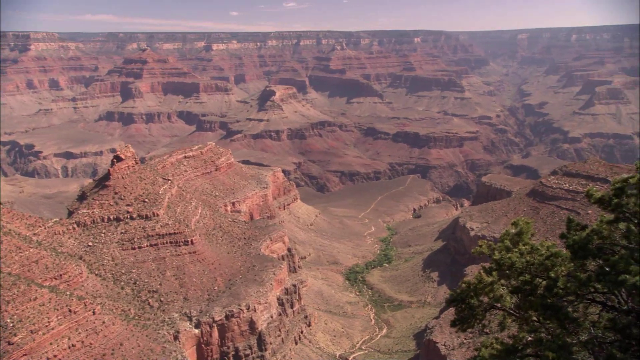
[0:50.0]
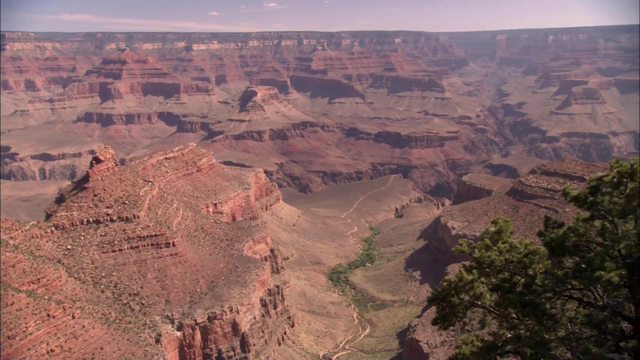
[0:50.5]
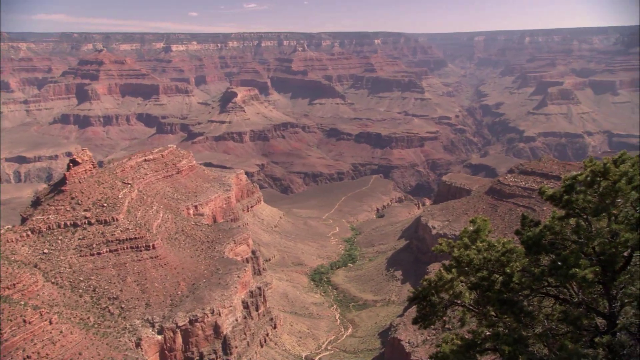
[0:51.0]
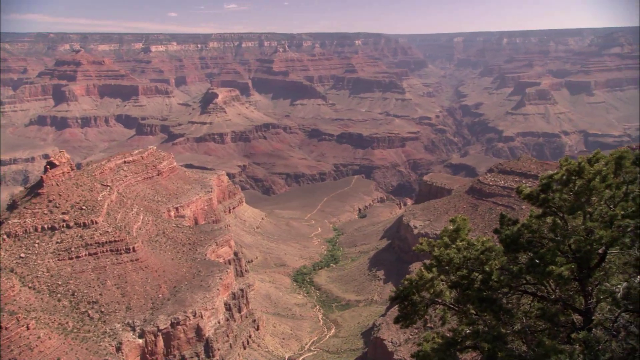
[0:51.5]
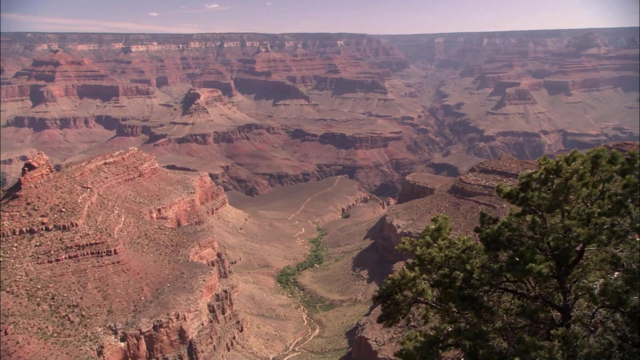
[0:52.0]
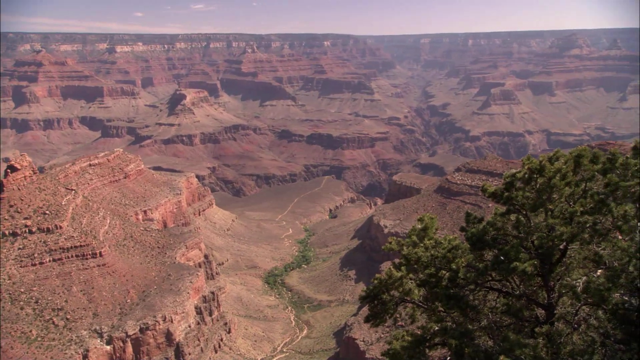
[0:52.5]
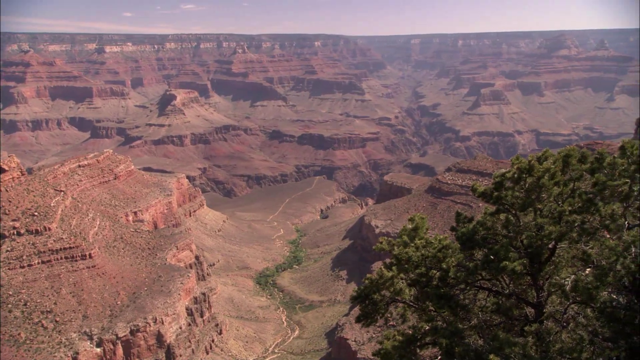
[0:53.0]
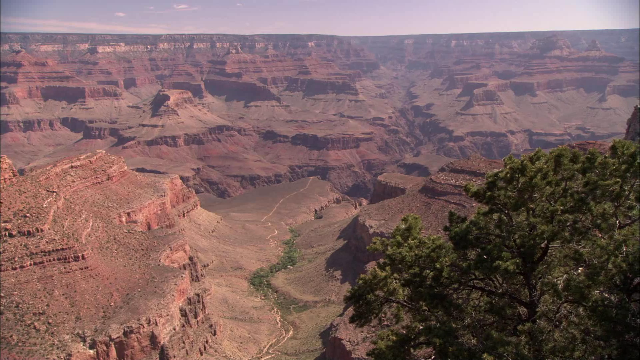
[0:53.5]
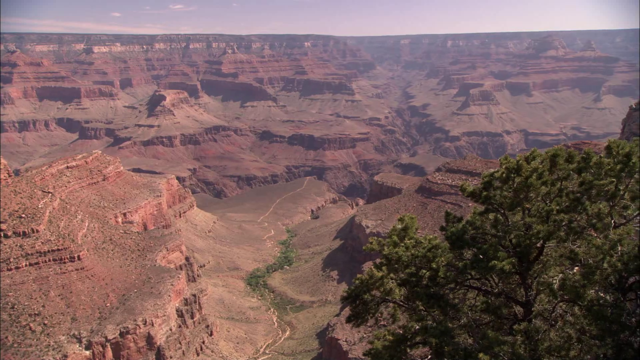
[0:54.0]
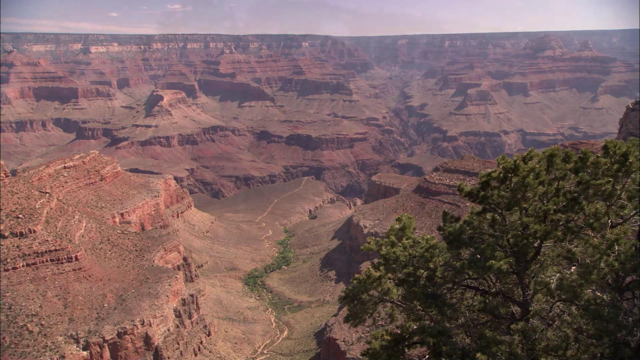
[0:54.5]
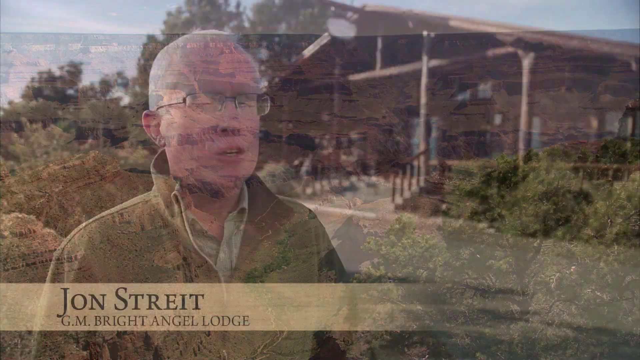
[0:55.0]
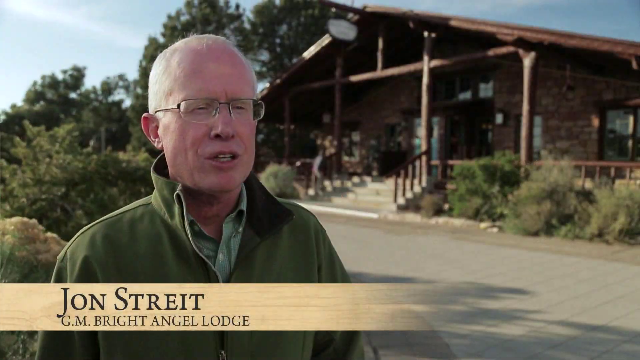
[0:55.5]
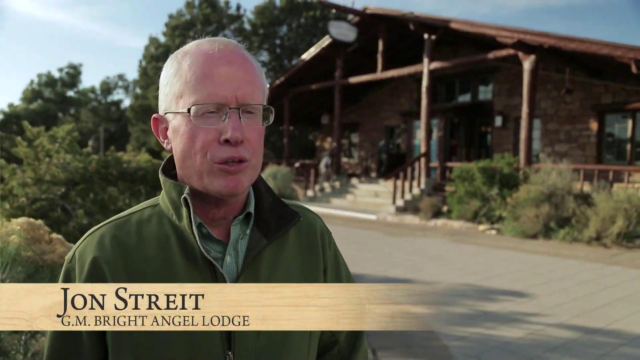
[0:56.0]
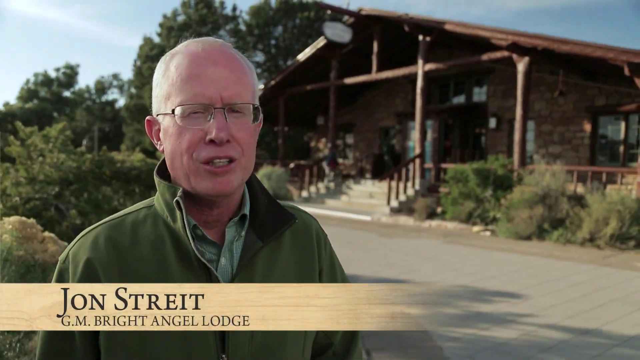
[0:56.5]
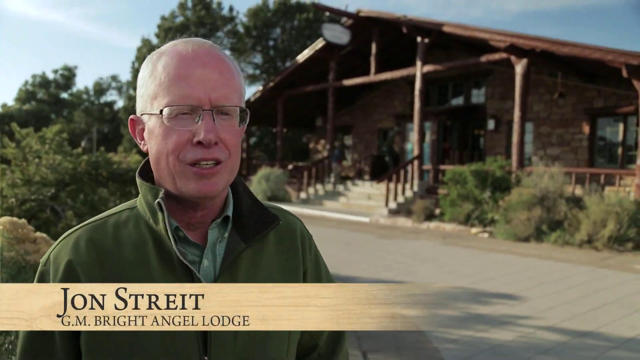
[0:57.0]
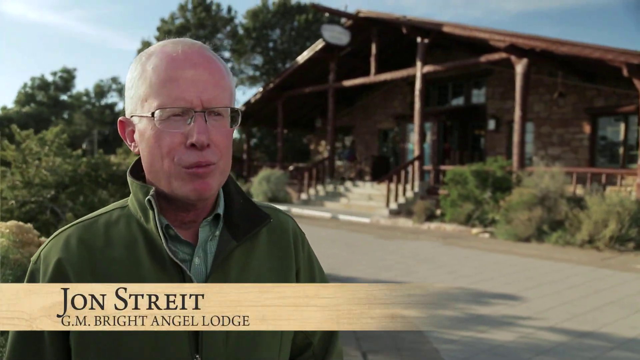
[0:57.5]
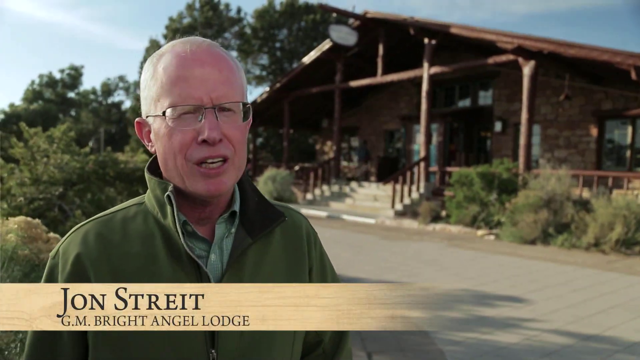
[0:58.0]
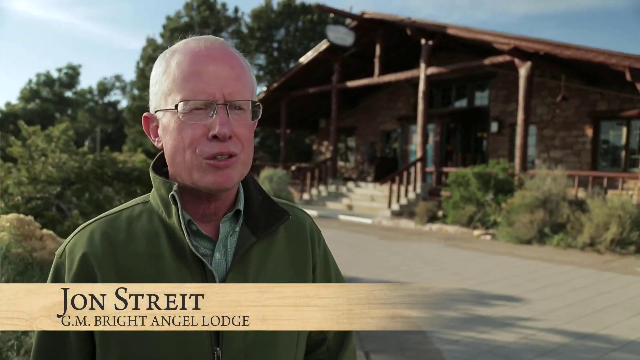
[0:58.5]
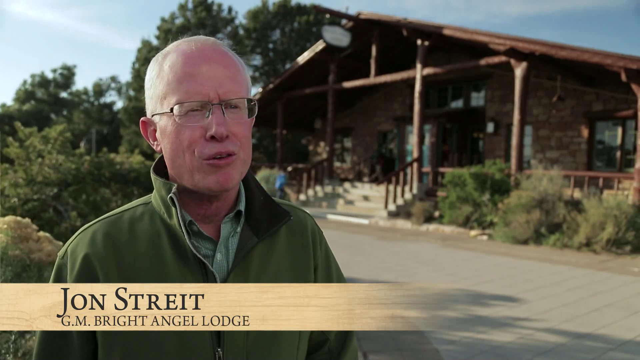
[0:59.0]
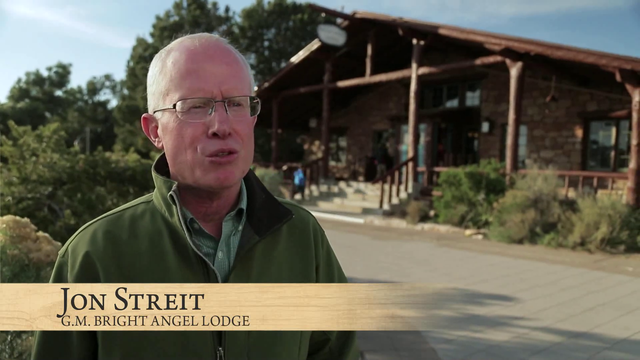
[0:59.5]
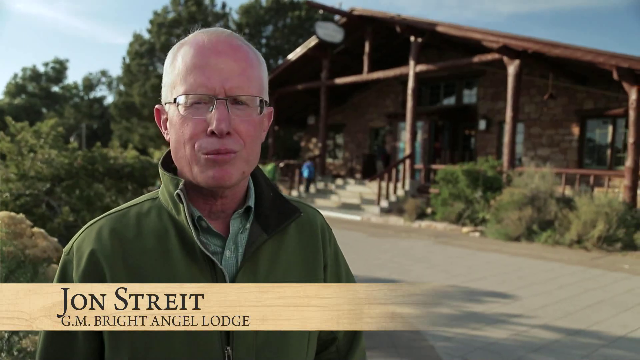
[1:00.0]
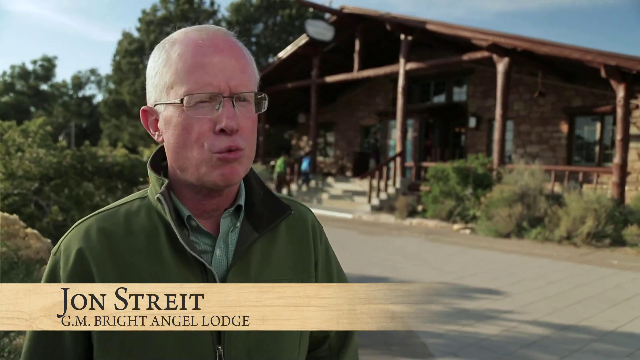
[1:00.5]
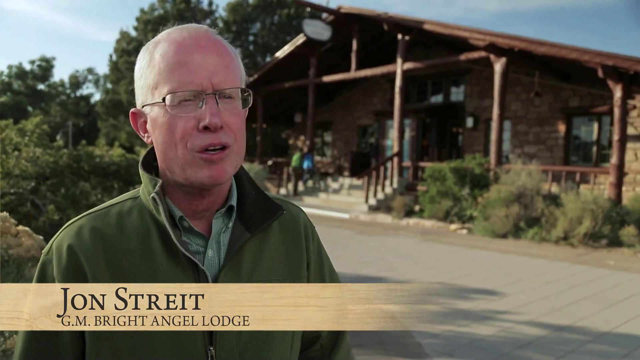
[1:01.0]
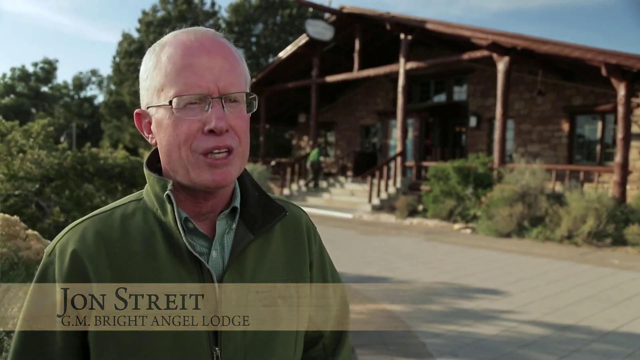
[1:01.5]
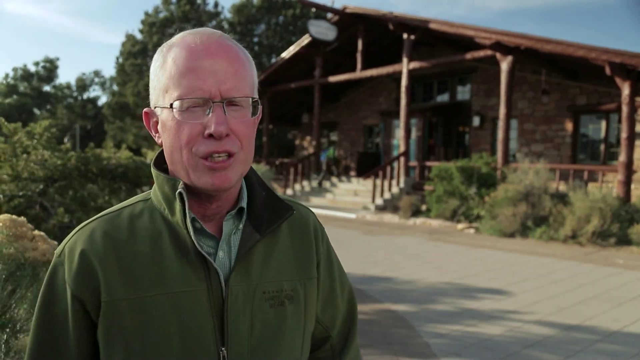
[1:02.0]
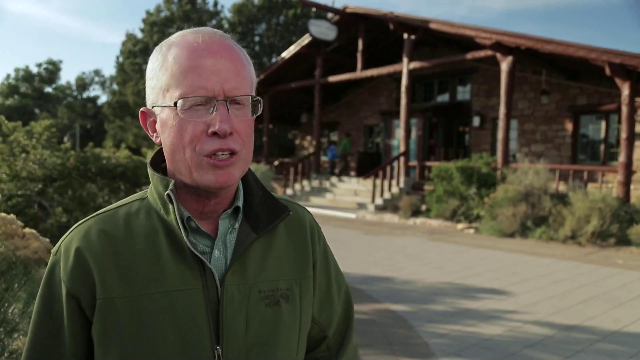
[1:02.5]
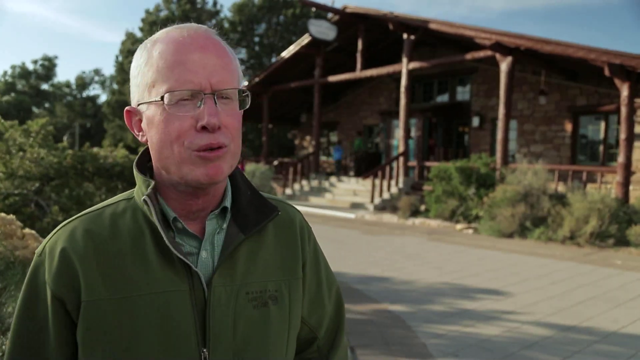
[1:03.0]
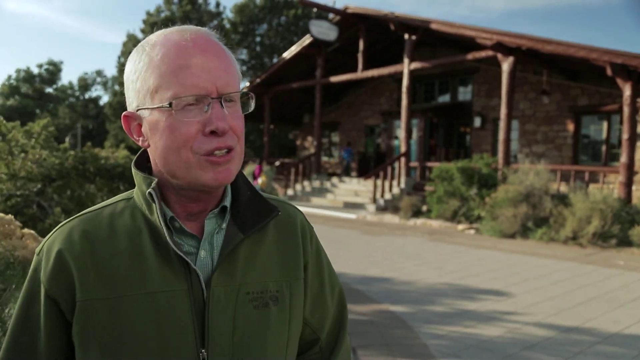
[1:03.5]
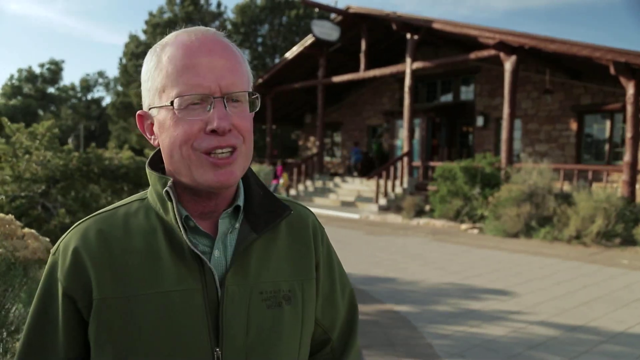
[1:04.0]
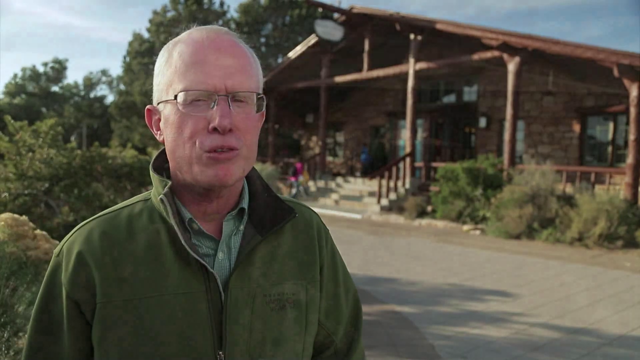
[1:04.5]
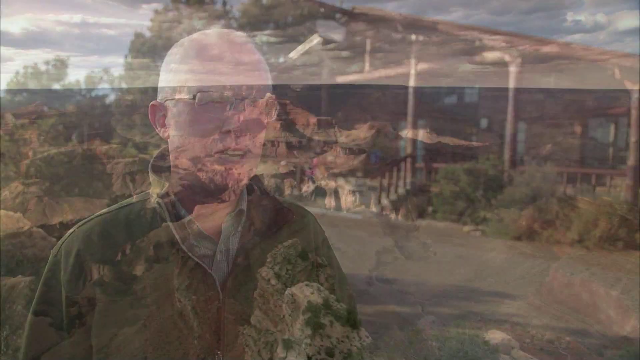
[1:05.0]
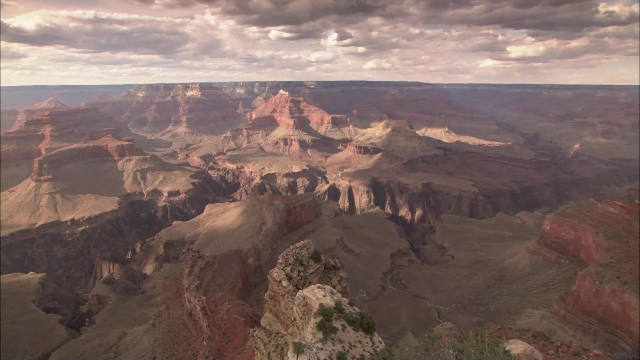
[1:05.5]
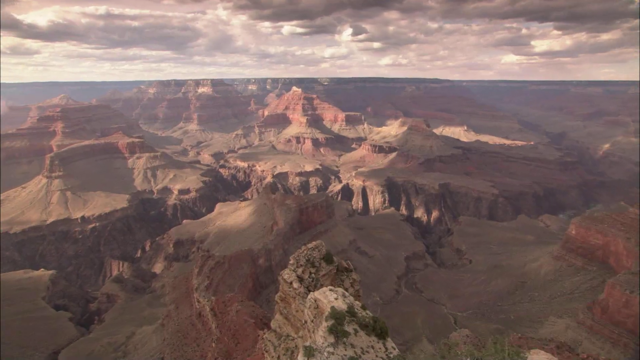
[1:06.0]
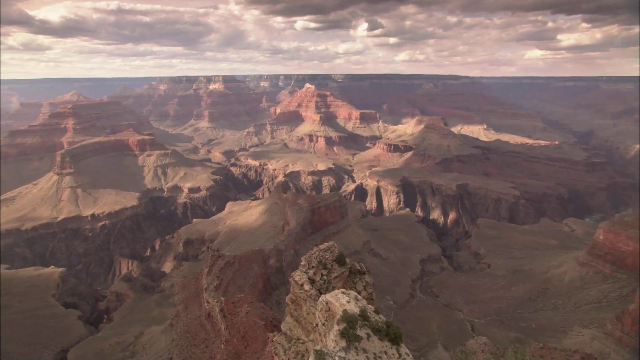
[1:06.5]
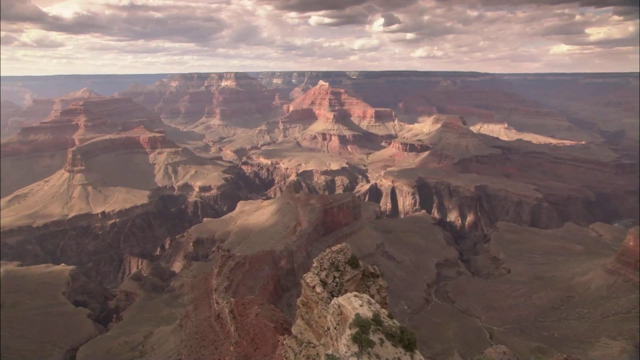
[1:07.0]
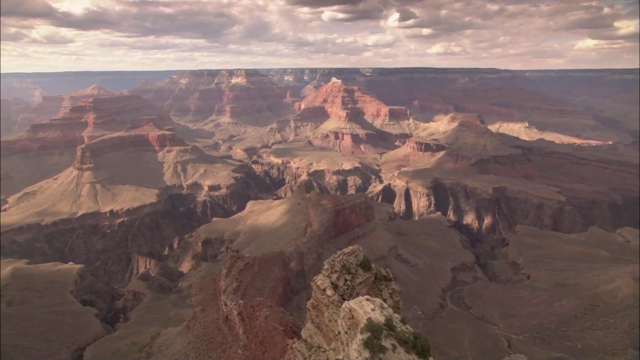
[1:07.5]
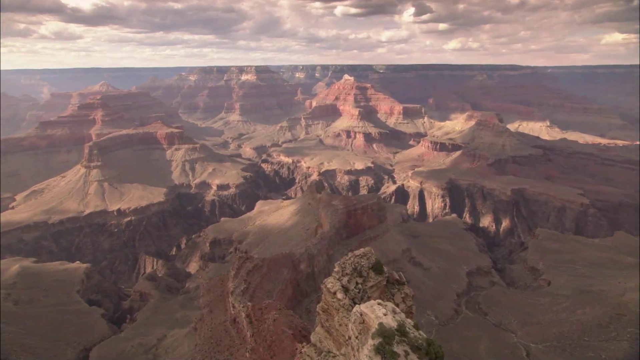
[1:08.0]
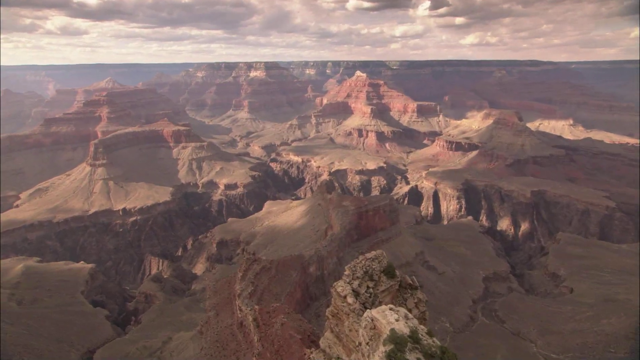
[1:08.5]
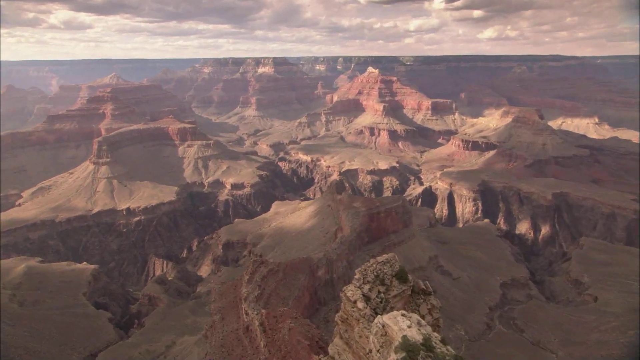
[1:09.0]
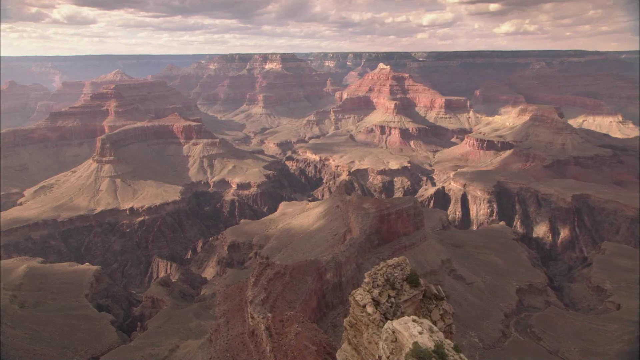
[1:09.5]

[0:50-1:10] A man appears with a lodge right behind him; he is apparently the chief of Bright Angel Lodge. He wears a green jacket, a green shirt and spectacles, and talks about the lodge. The view then returns to the landscape, where formations look like houses or rows of chairs, like a stadium; they look built but were not built. Down below, there is something that looks like paths for people to walk, though this is uncertain.